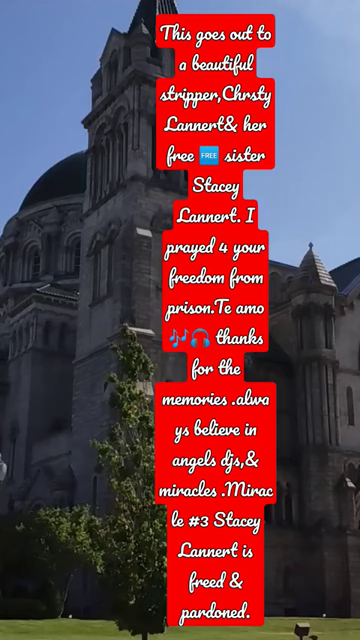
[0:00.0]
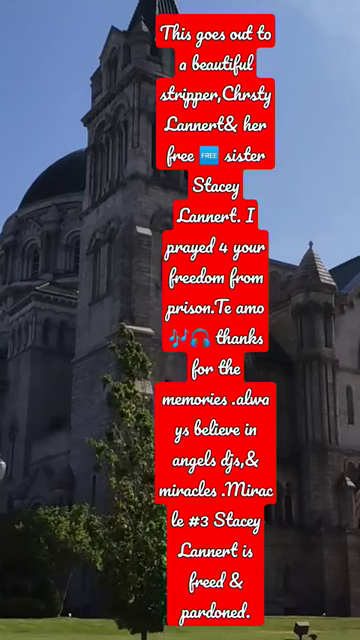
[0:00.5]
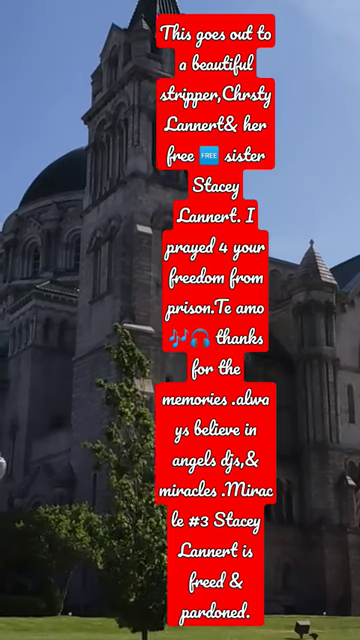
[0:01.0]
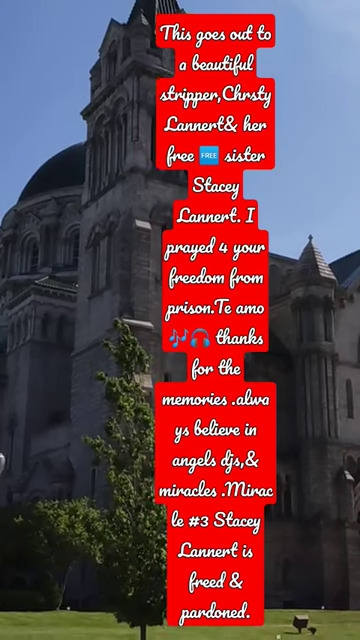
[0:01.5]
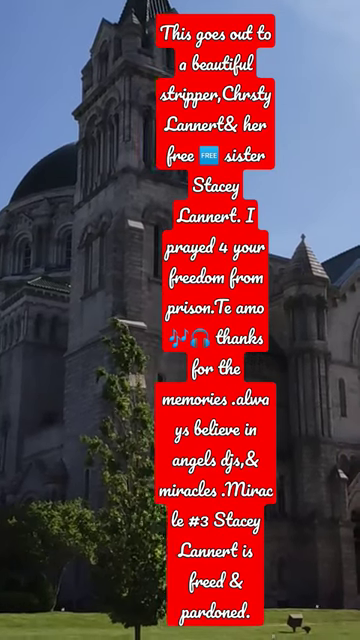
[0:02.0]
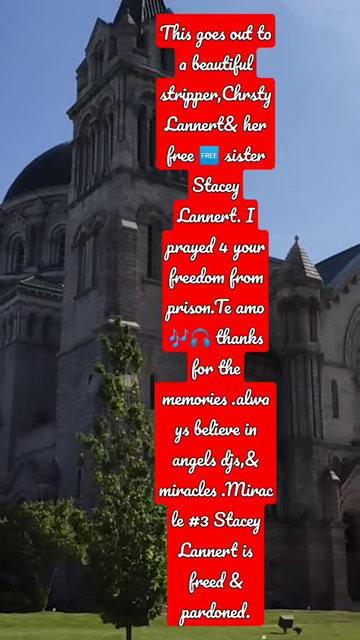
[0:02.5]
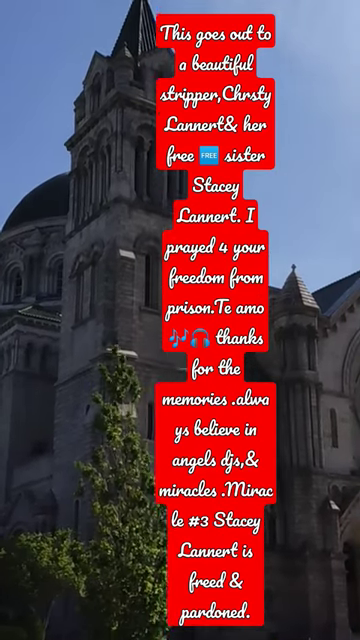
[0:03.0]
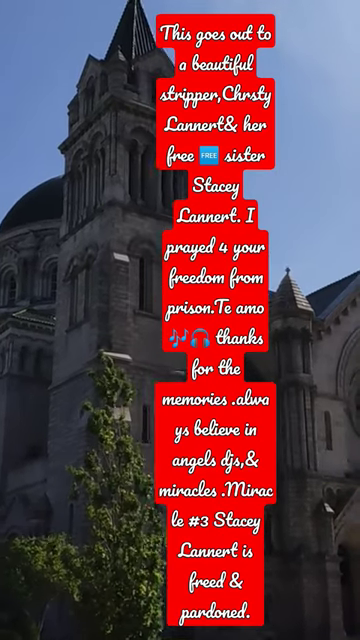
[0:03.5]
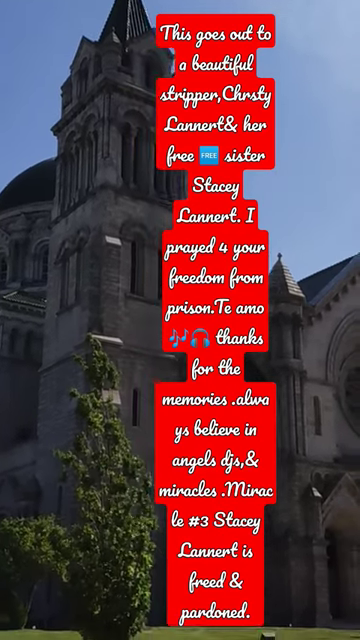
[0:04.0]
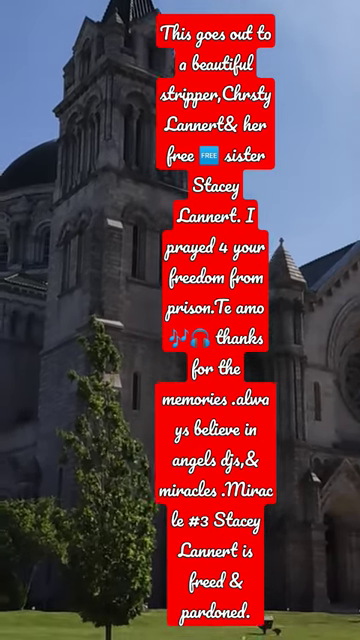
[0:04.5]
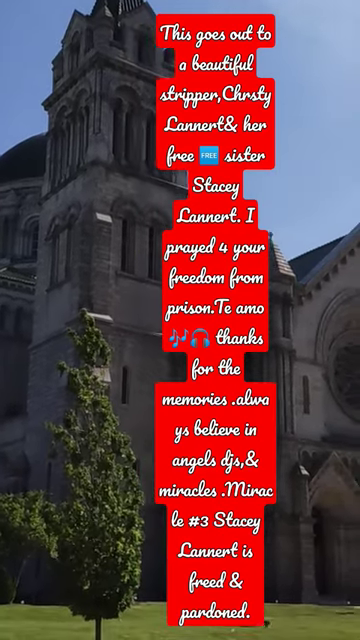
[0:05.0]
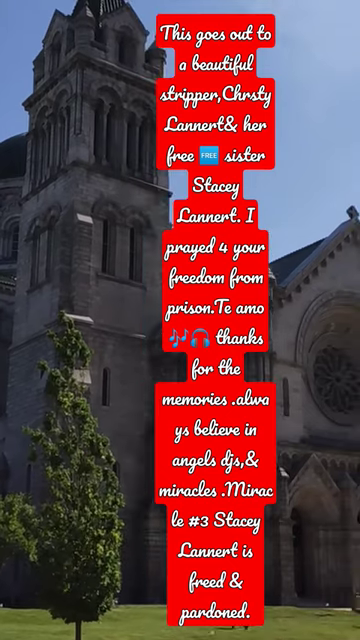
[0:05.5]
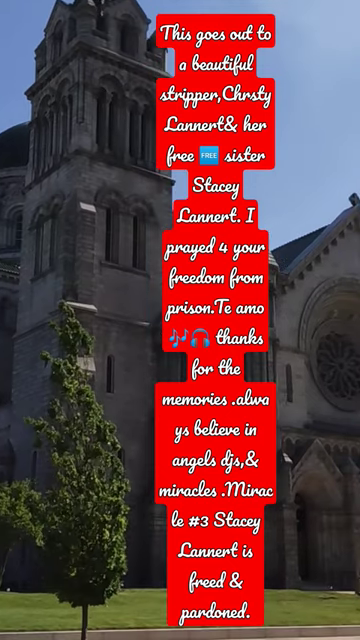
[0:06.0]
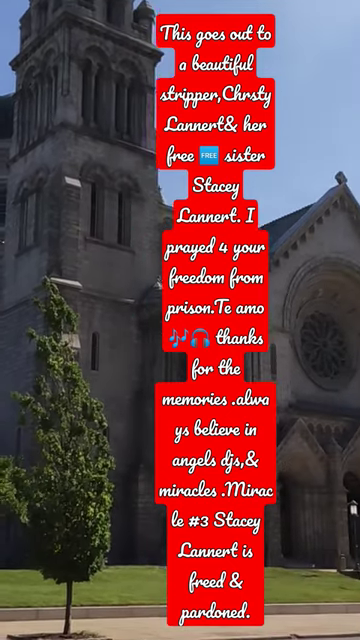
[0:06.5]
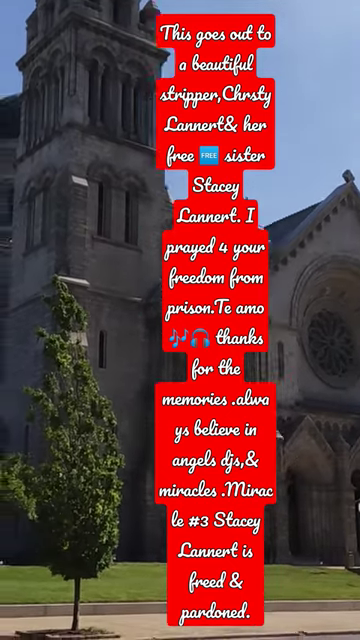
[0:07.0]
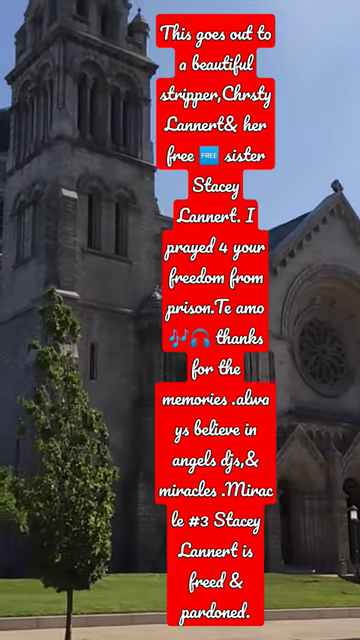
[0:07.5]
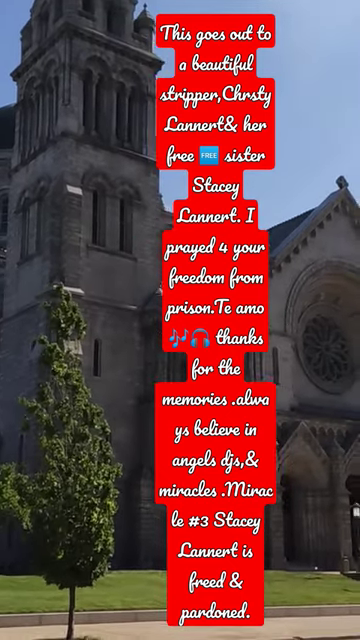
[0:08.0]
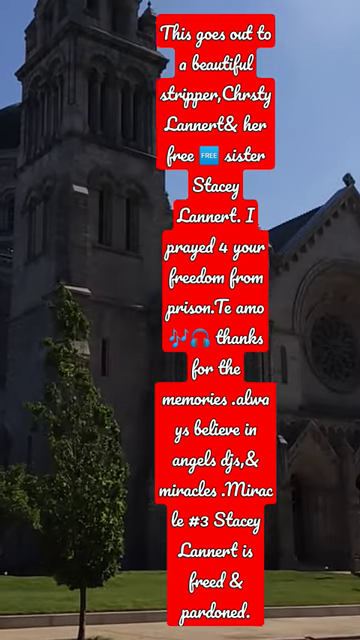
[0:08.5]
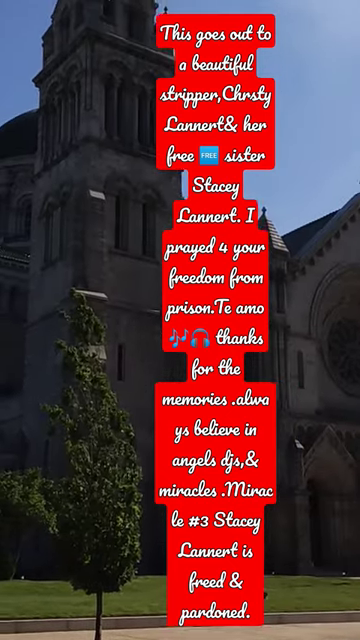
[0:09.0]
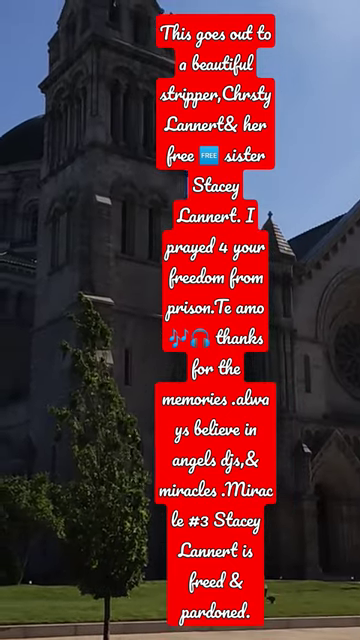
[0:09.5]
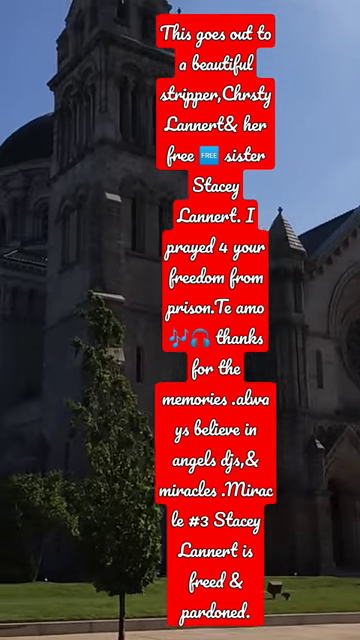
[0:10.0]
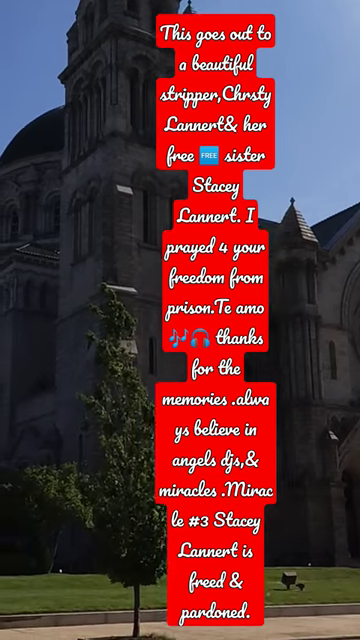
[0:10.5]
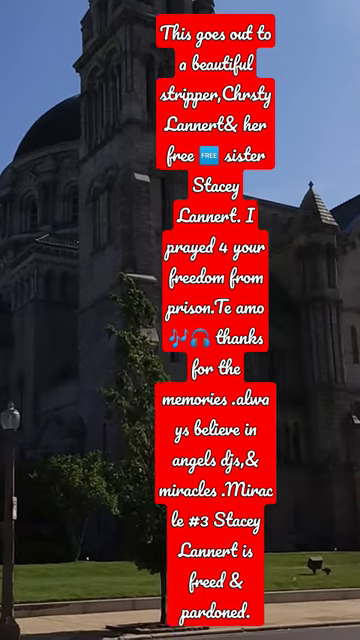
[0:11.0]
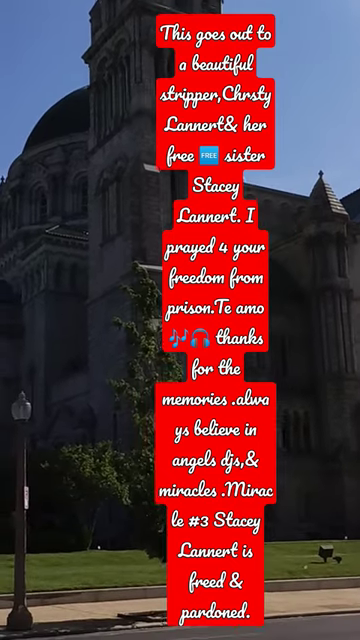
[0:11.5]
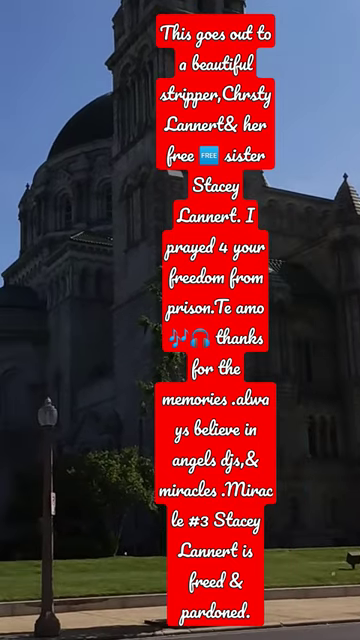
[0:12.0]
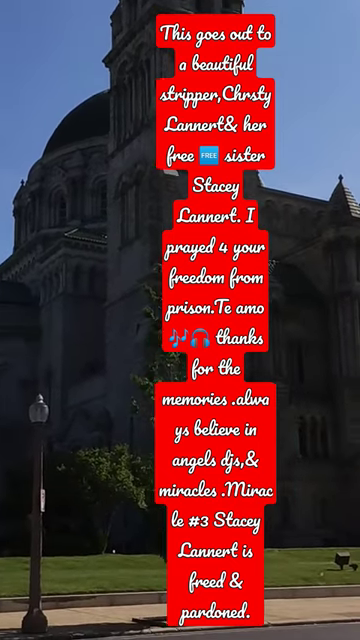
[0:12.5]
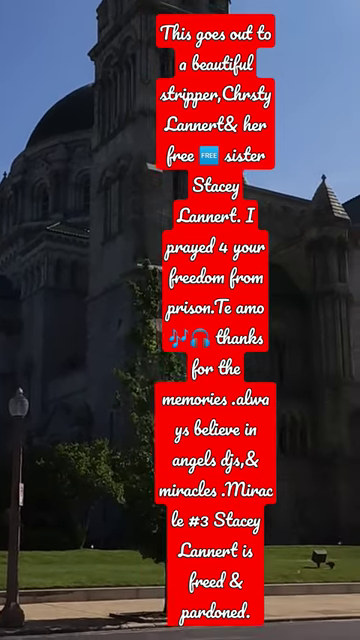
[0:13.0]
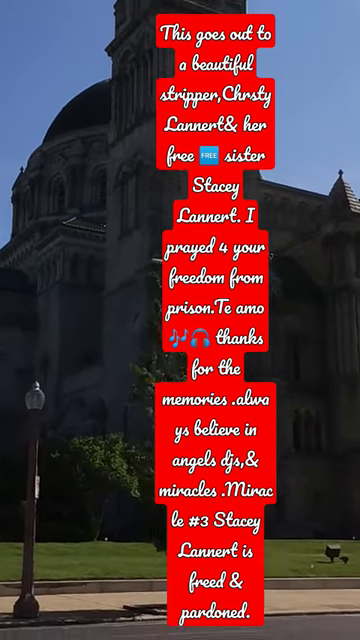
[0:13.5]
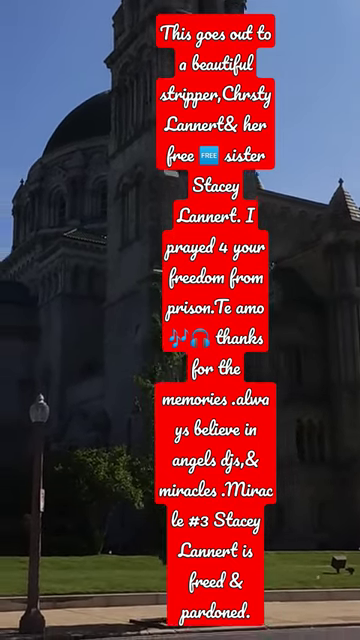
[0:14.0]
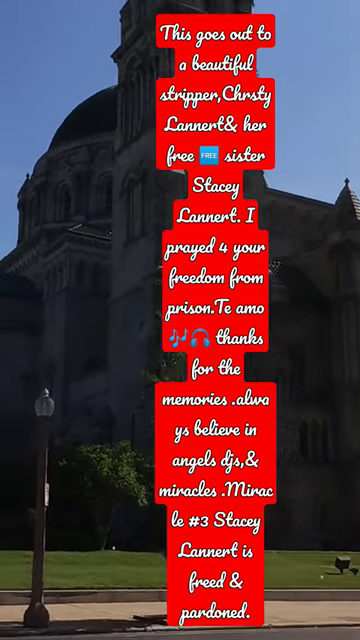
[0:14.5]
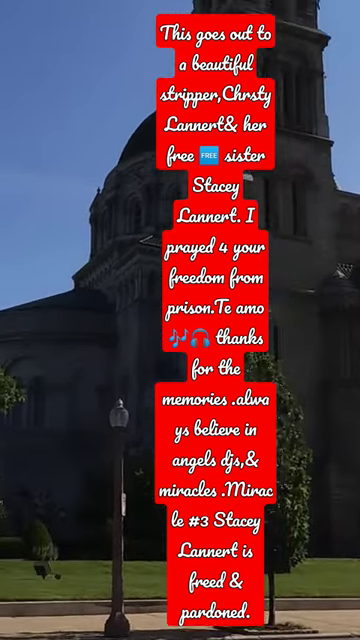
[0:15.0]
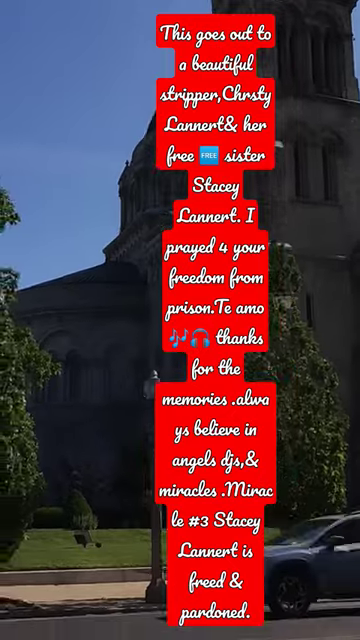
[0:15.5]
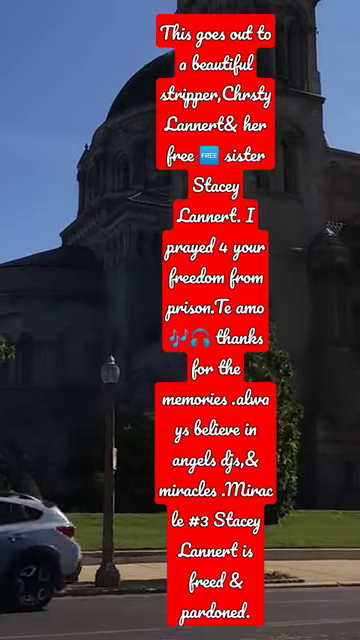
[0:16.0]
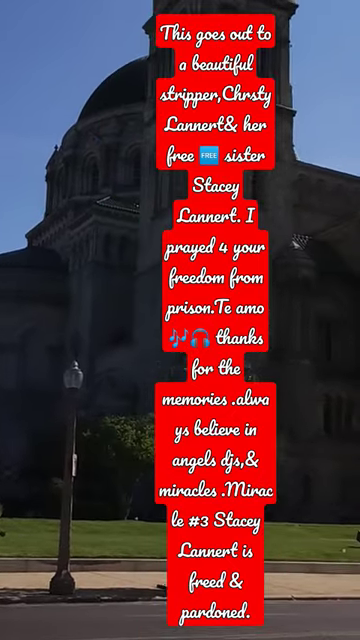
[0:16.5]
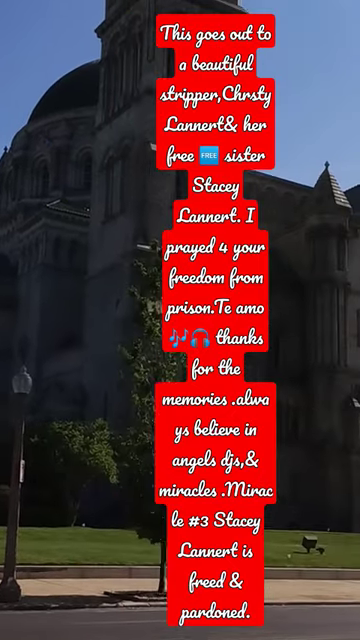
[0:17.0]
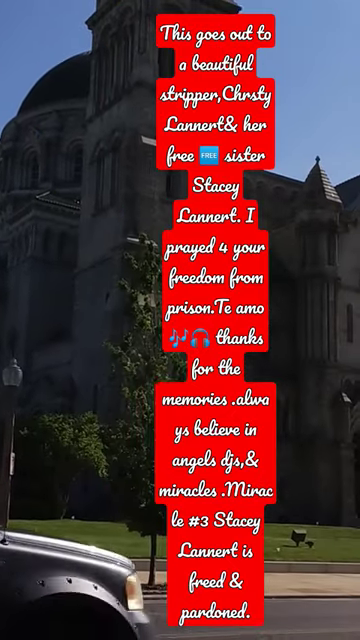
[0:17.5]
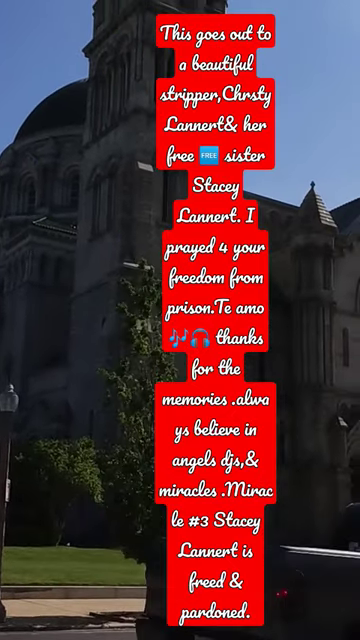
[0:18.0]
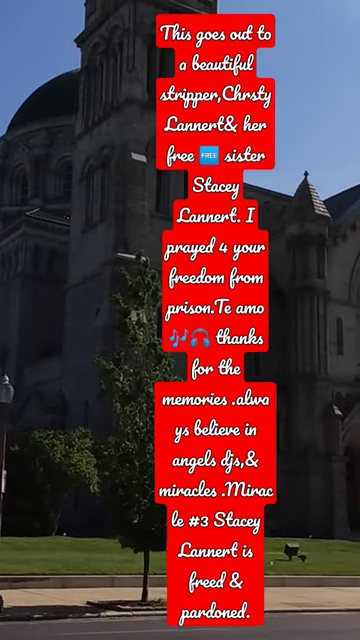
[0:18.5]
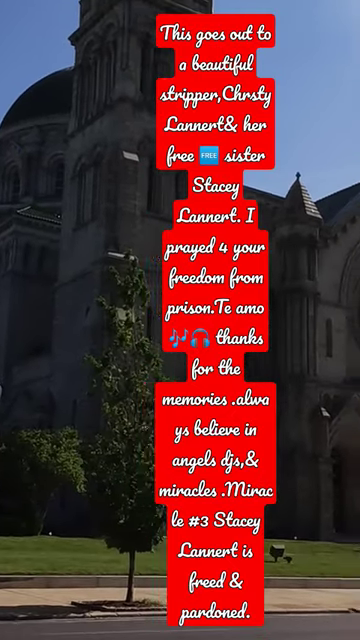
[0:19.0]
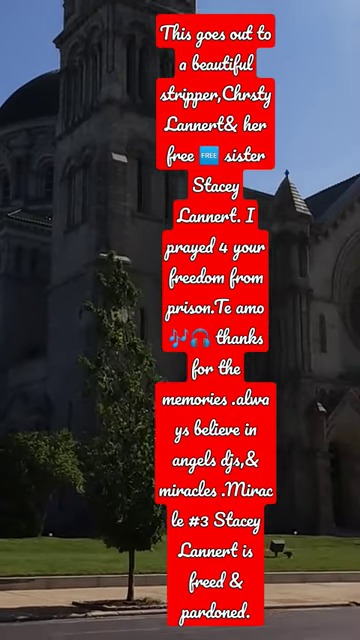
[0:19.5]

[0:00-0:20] A vertical video, likely taken with a phone, shows someone recording an old church. Blue sky is visible in the background, and there is a tree in front of the building. The very large gray building has four or five floors, some hexagonal rooftops, a hemispherical dome, and several towers with open windows that have no glass, just open space. A vehicle drives by as the person holds the camera to record the building; the footage is shaky and unstable. Overlaying the video is a message with a red background and white lettering that reads: "This goes out to a beautiful stripper, Kristi Lannert, and her free sister Stacey Lannert. I prayed for your freedom from prison. Te amo. Thanks for the memories. Always believe in angels, DJs, and miracles. Miracle number three. Stacey Lannert is freed and pardoned."